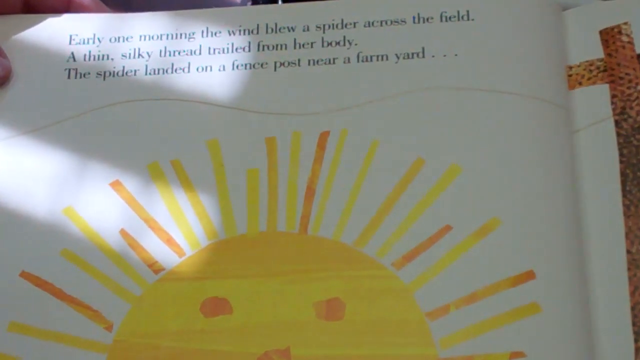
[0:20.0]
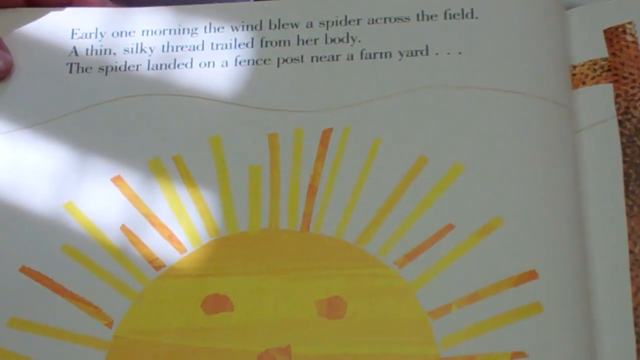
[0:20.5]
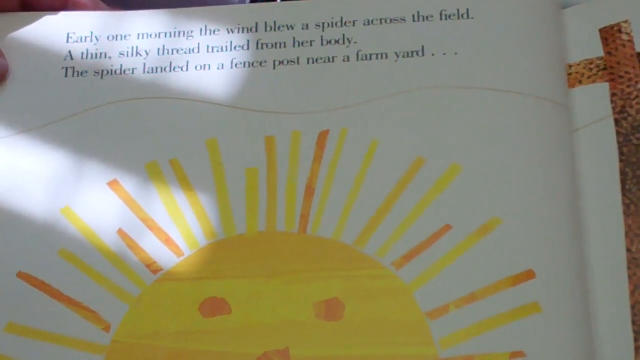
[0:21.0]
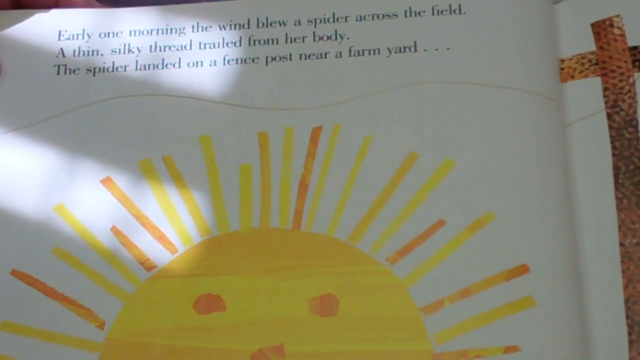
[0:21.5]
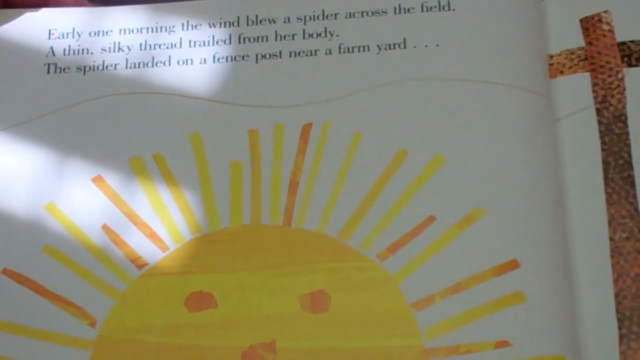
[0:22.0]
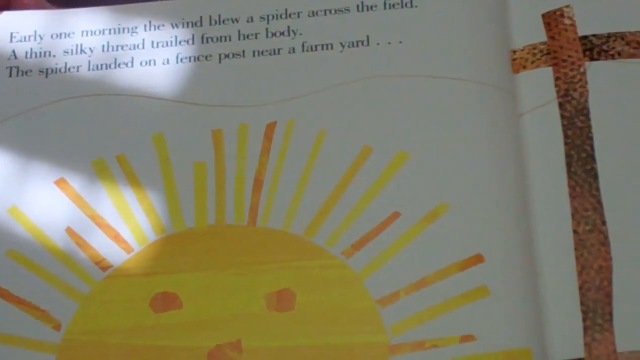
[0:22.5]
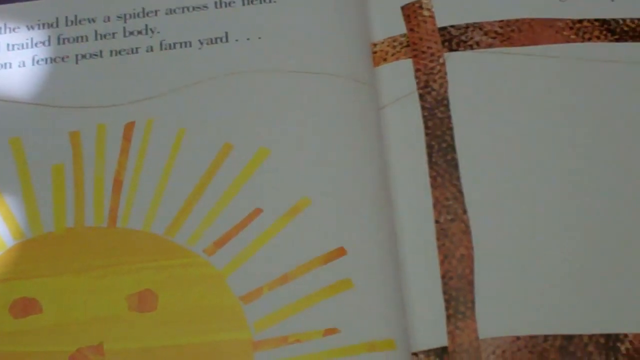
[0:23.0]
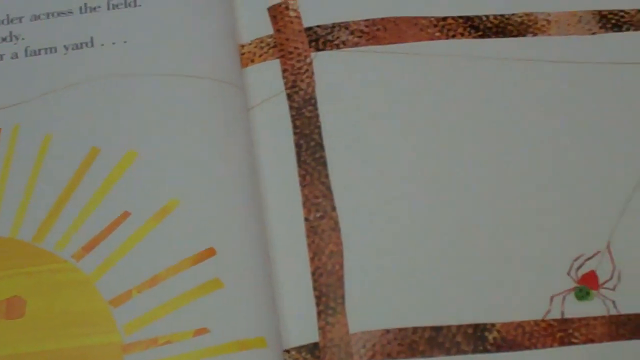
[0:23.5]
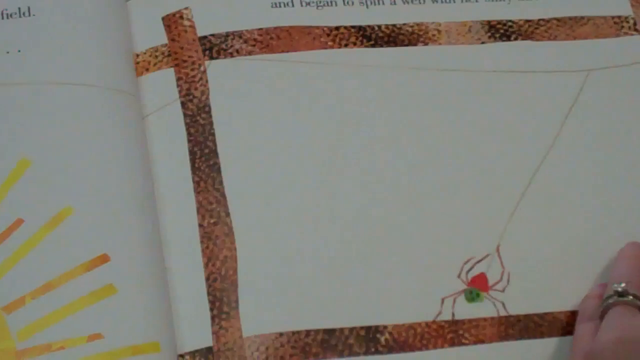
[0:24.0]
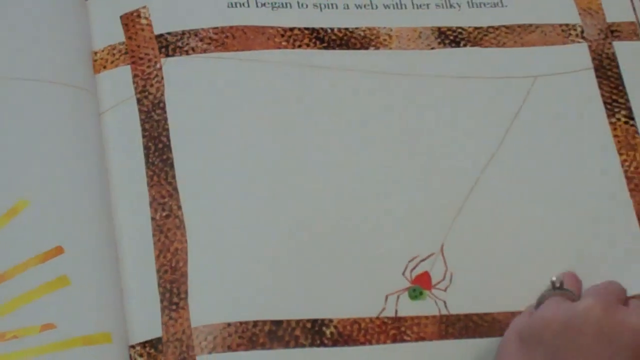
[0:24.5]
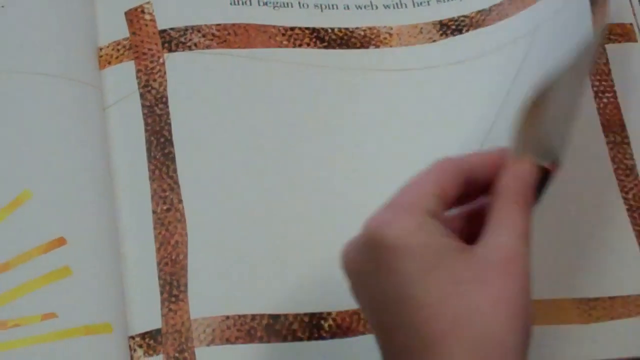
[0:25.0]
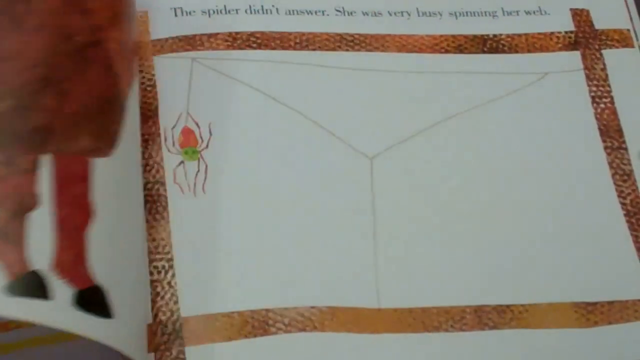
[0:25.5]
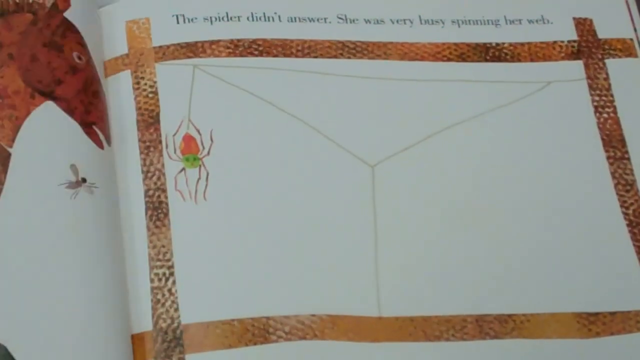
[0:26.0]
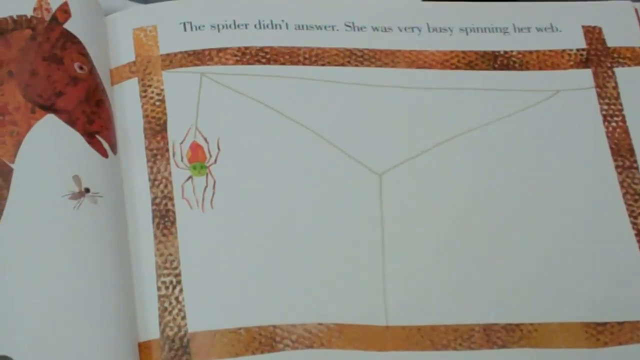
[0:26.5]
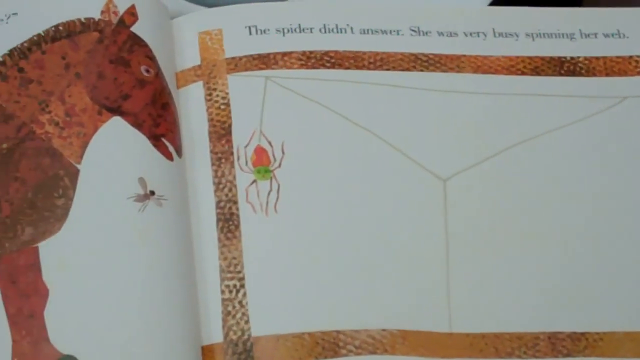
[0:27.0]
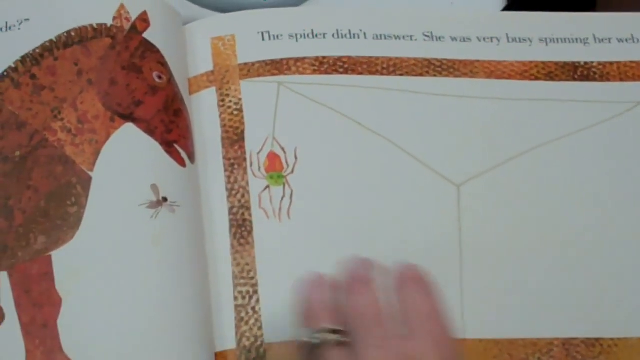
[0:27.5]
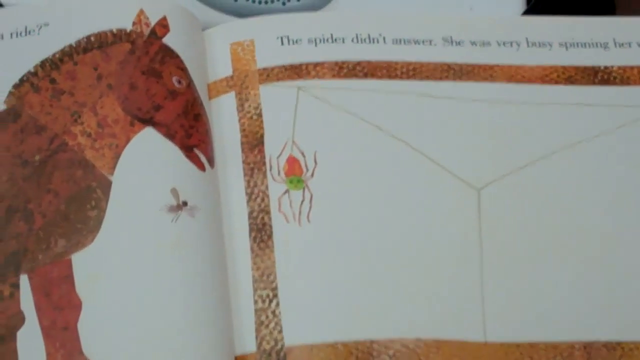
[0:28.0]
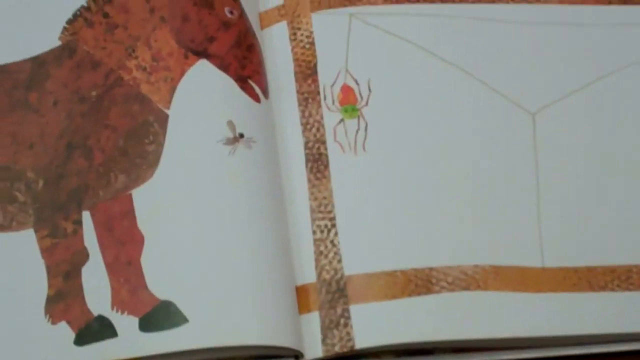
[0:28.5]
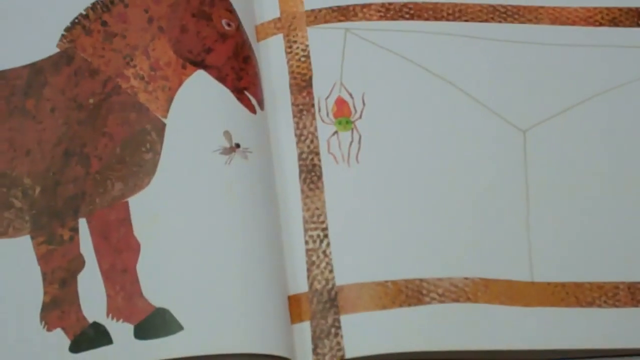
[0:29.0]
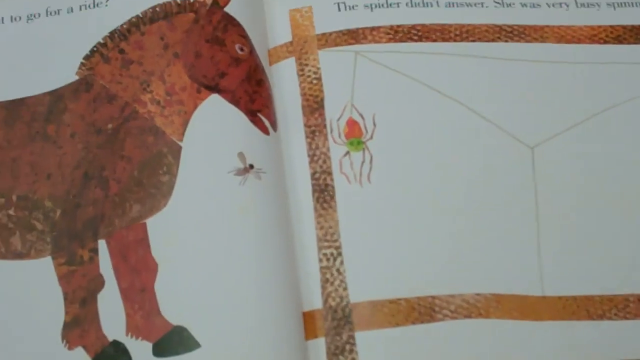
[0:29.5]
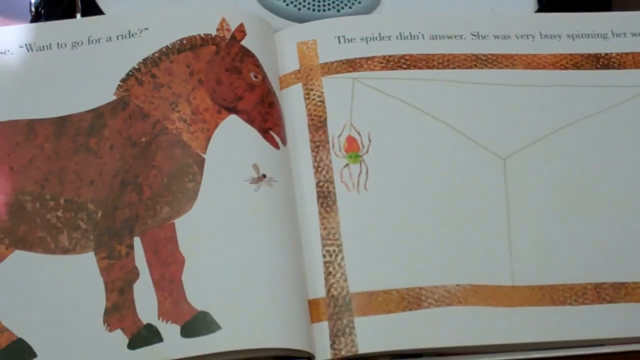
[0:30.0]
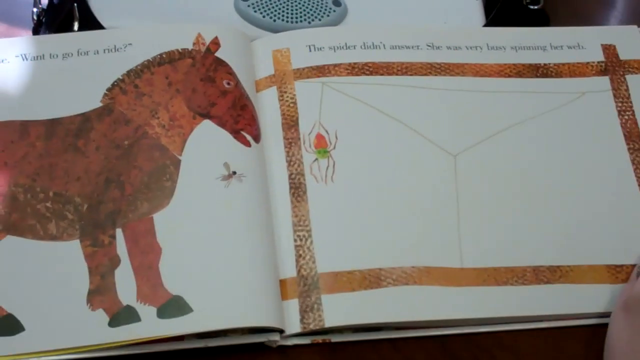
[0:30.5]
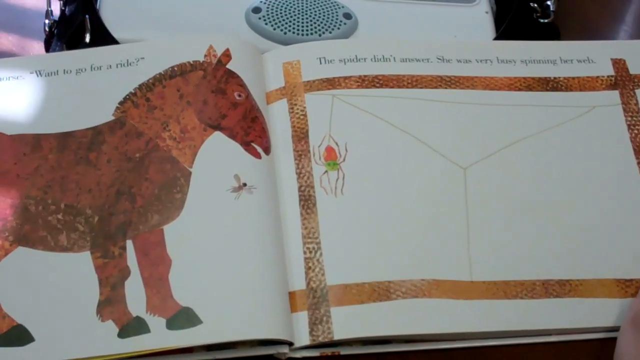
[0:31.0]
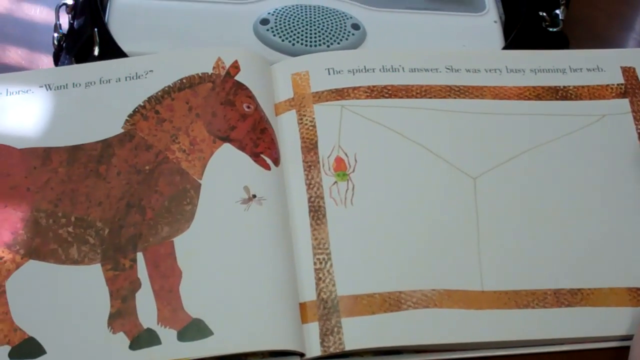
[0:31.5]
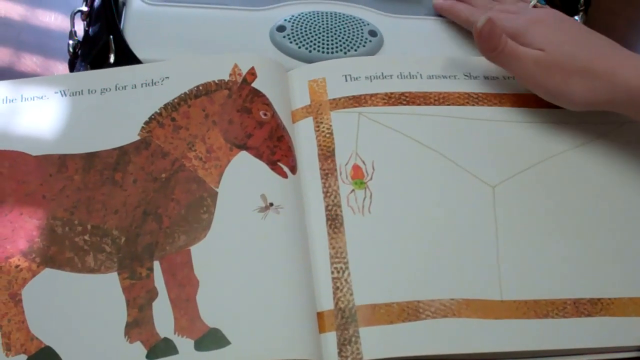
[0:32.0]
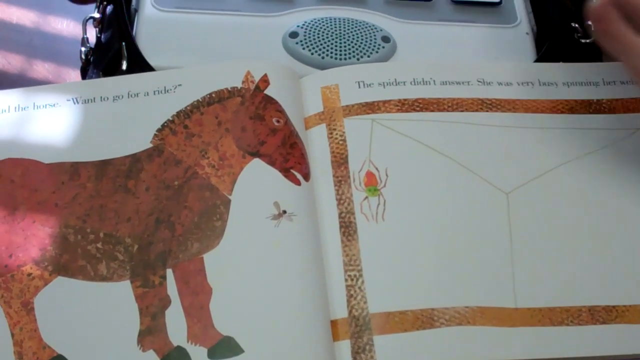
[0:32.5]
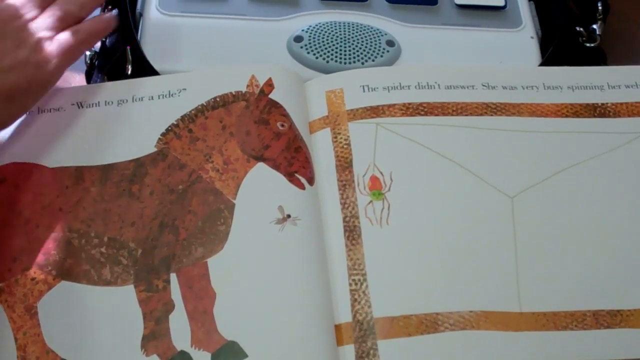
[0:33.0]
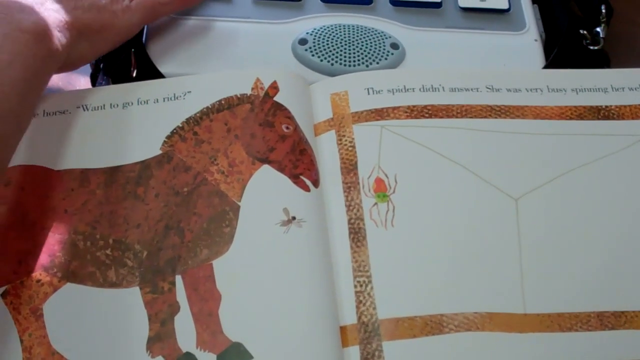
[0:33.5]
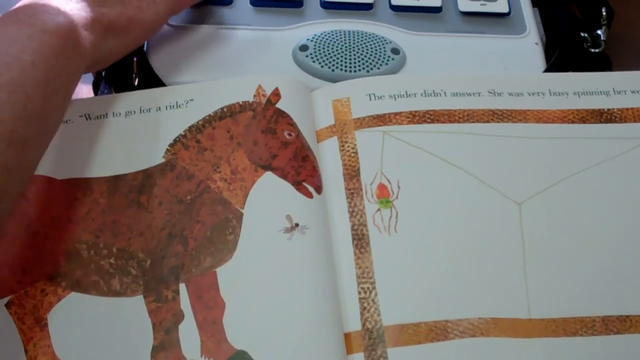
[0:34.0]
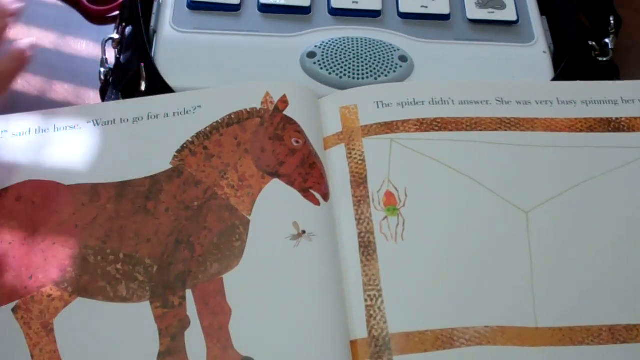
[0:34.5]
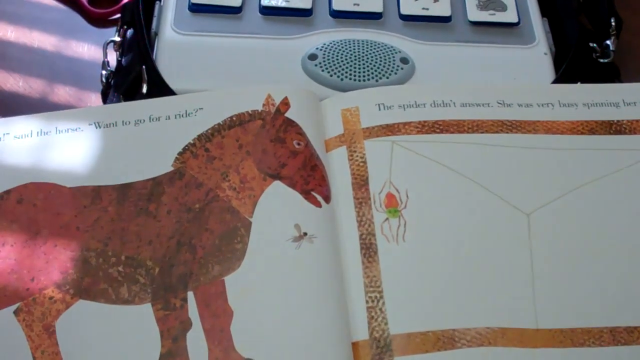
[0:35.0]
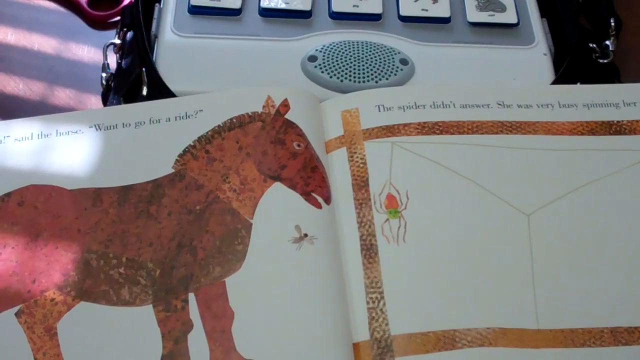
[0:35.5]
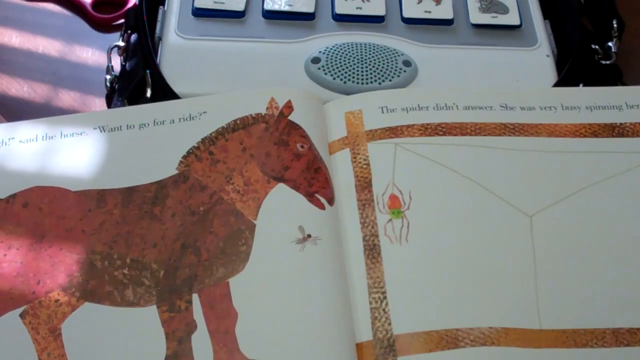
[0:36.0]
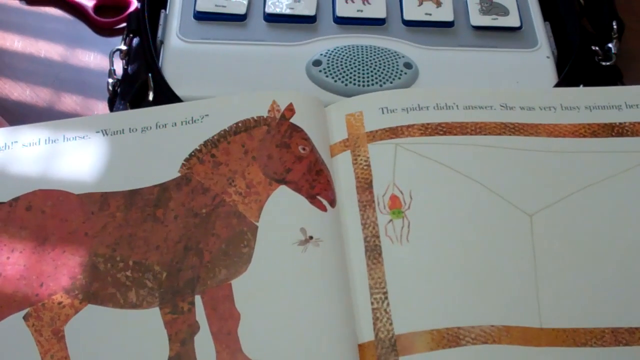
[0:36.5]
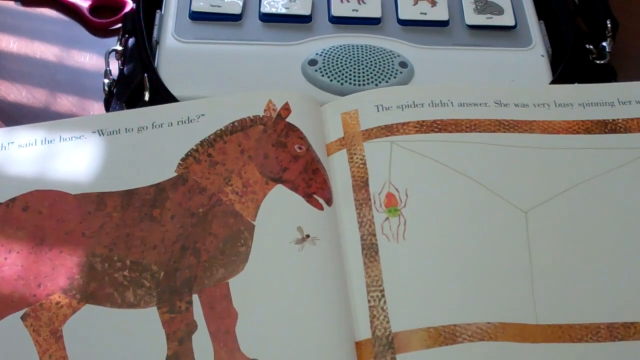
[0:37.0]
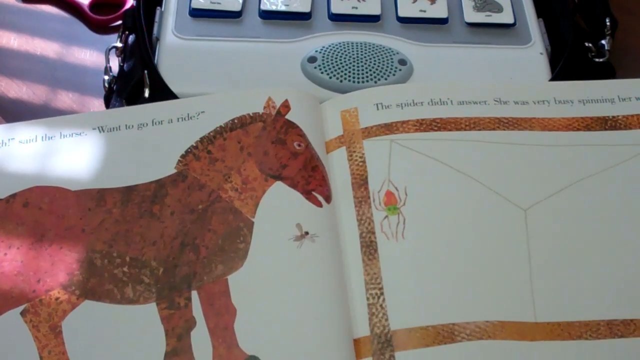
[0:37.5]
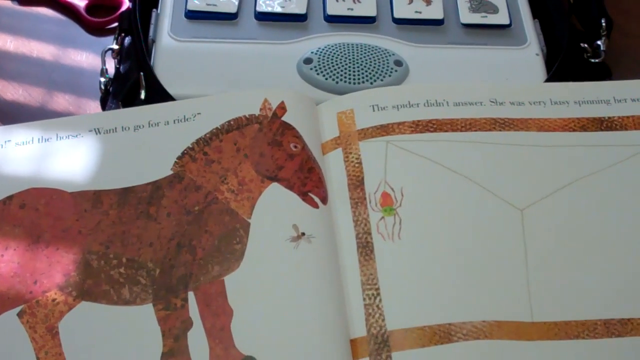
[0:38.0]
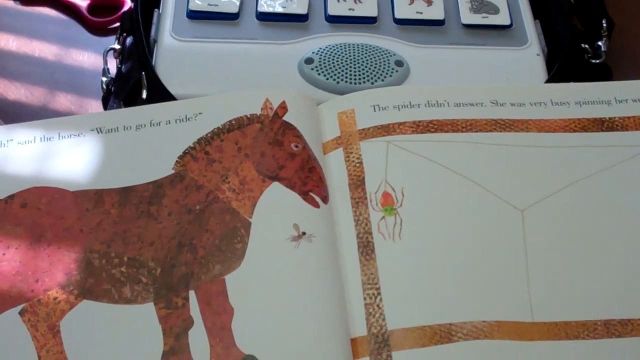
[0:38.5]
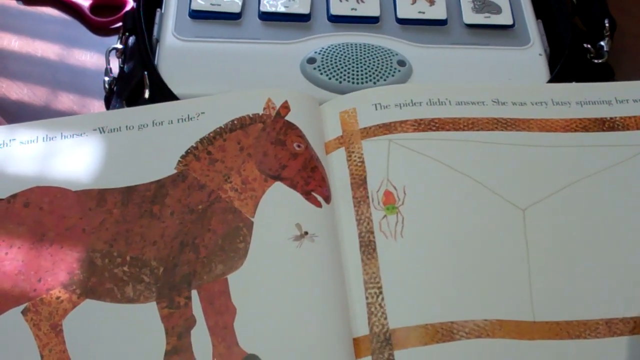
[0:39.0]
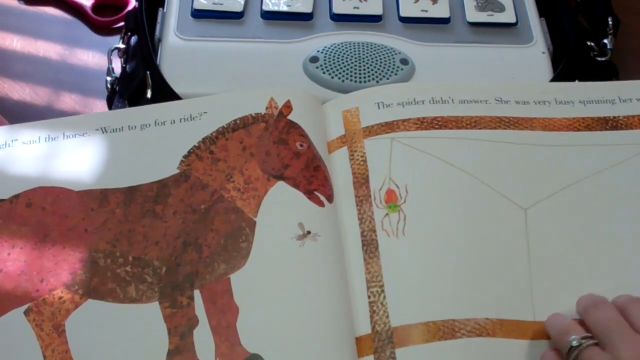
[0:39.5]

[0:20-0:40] The left-hand side of the open Eric Carle book is shown, with a picture of a half-sun rising at the bottom. The text above it reads "Early one morning the wind blew a spider across the field. A thin, silky thread trailed from her body. The spider landed on a fence post near a farmyard." The camera pans over to the second page, which shows a square of fence posts, with the text "And began to spin a web with her silky thread." The woman's left hand turns the page. The left-hand page now shows a horse and the text "Want to go for a ride?" The right-hand page shows the fence posts with the spider, which has a red body, a green head and eight legs and is hanging from a thread as she spins a web. The text reads "The spider didn't answer. She was very busy spinning her web."